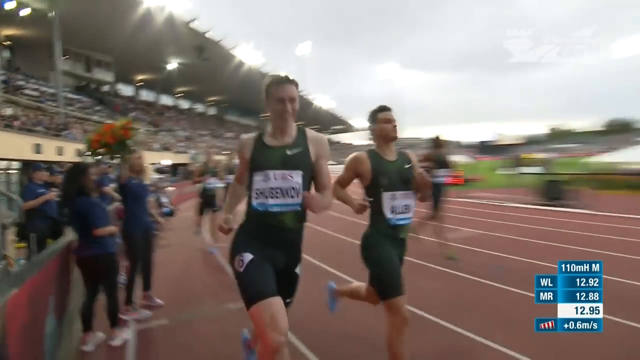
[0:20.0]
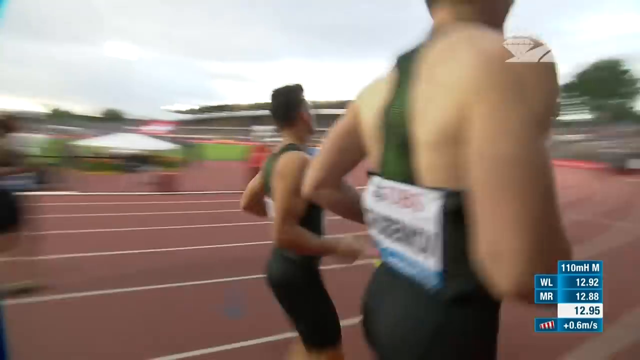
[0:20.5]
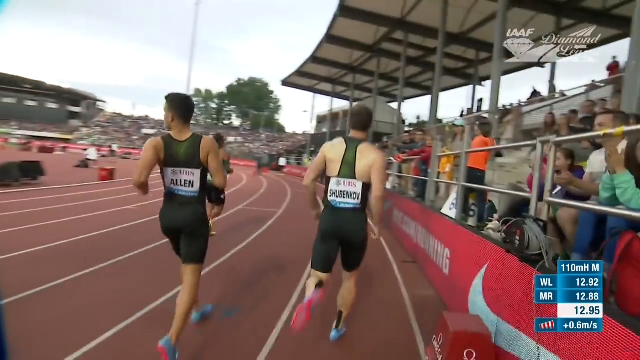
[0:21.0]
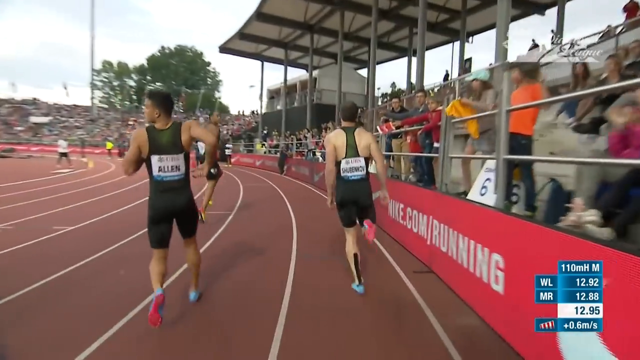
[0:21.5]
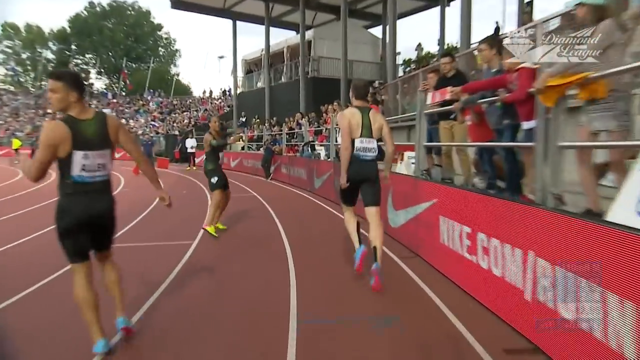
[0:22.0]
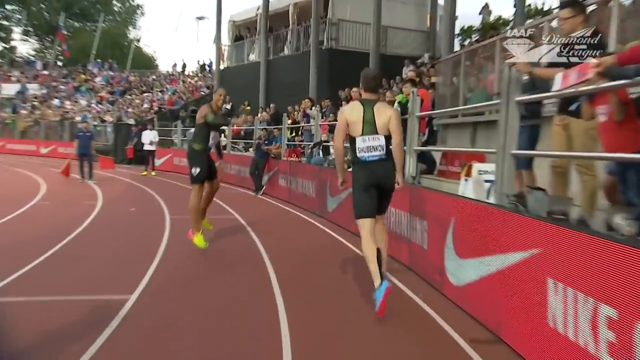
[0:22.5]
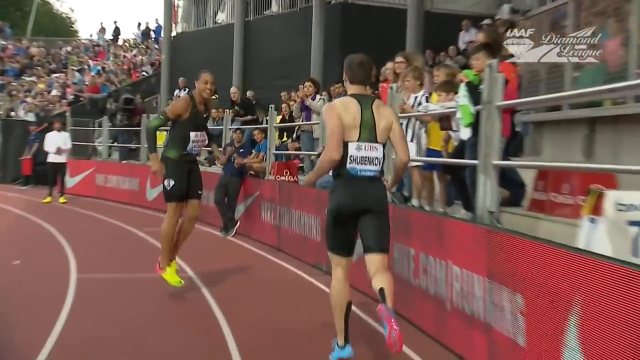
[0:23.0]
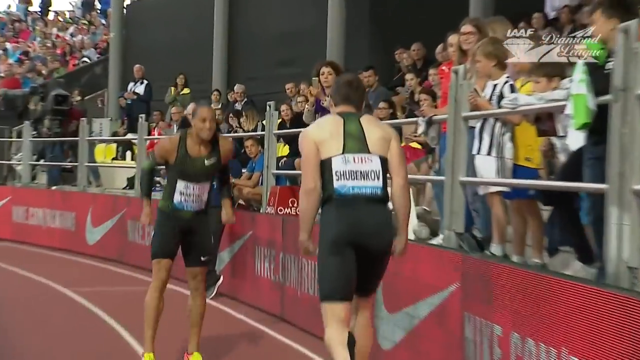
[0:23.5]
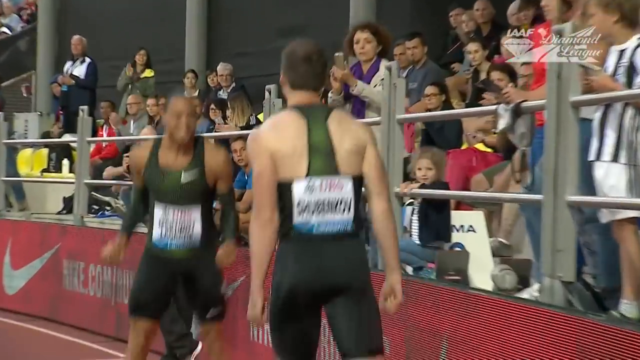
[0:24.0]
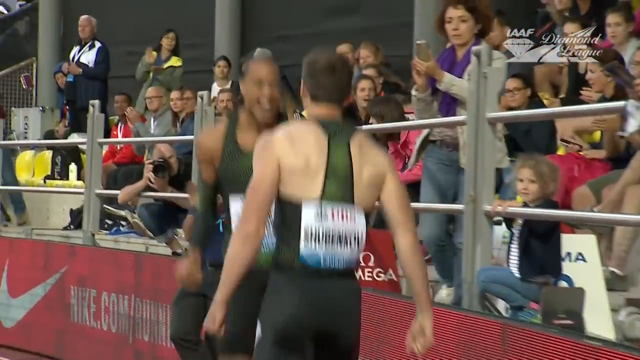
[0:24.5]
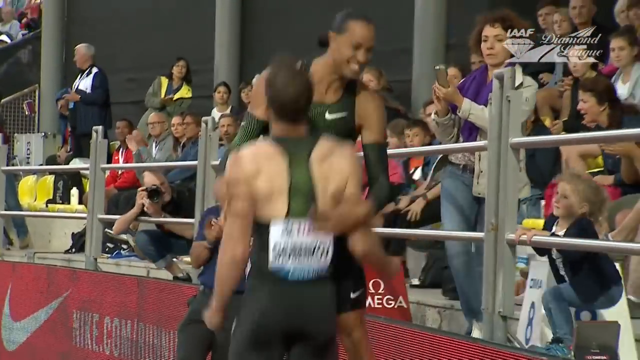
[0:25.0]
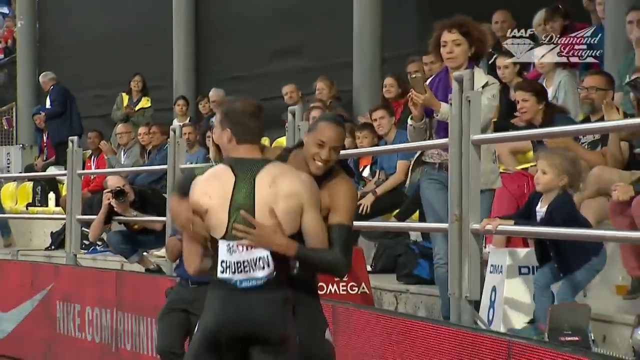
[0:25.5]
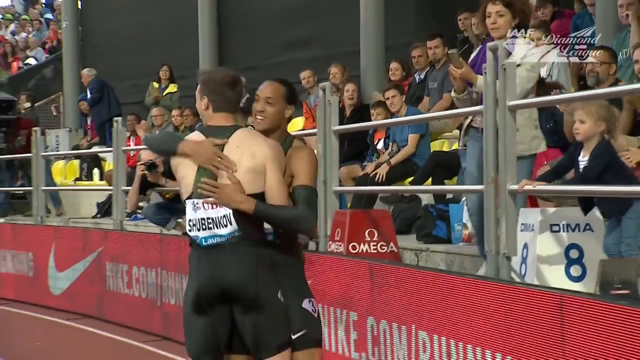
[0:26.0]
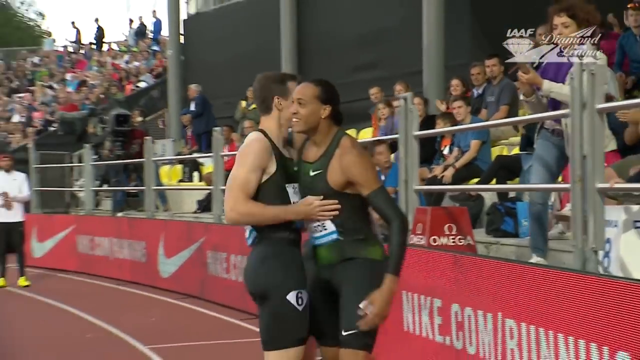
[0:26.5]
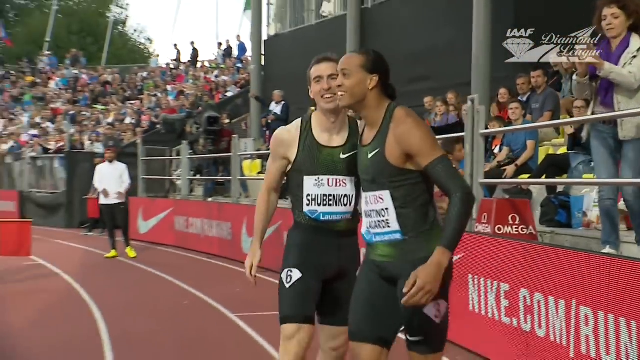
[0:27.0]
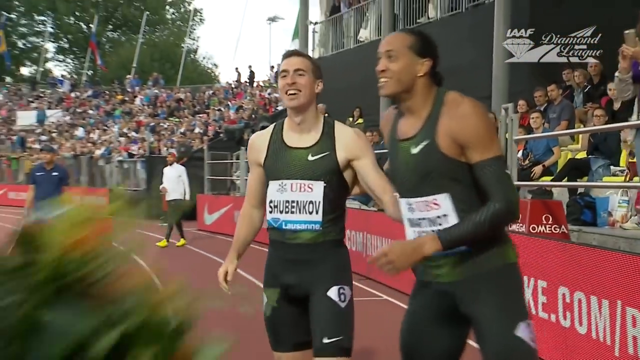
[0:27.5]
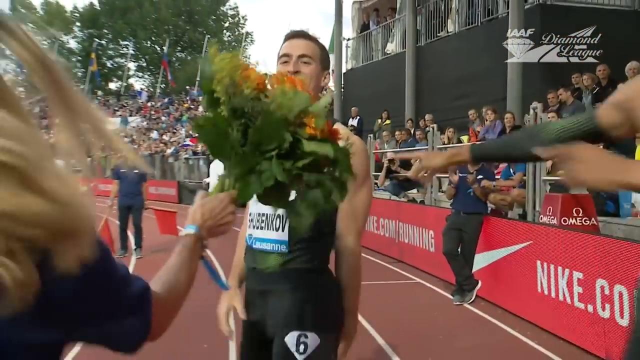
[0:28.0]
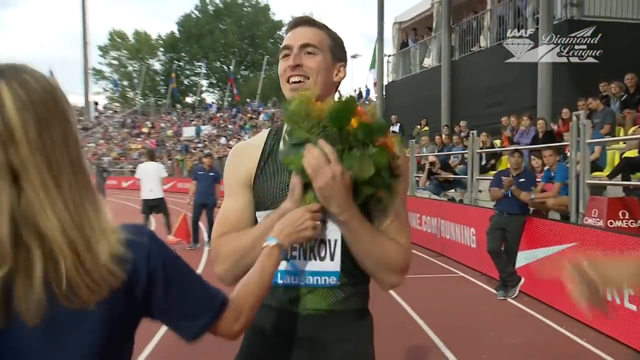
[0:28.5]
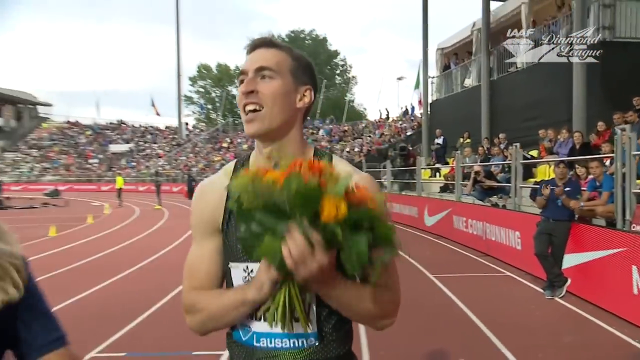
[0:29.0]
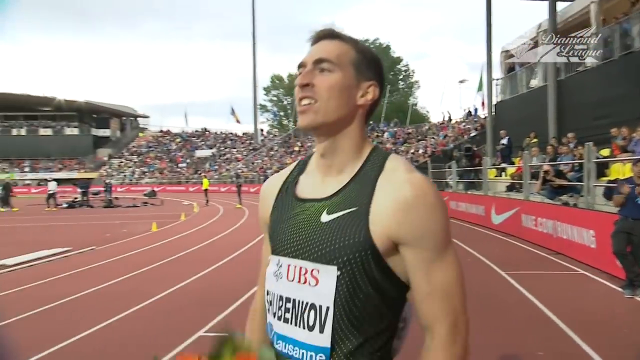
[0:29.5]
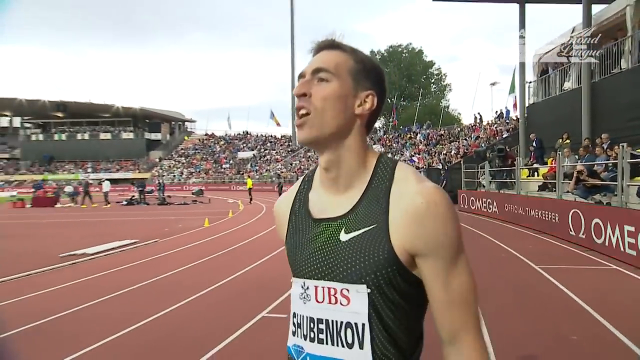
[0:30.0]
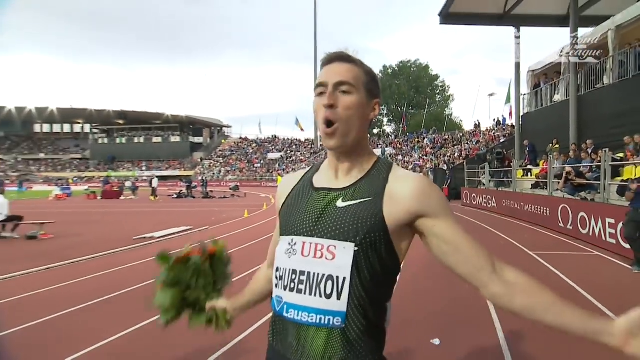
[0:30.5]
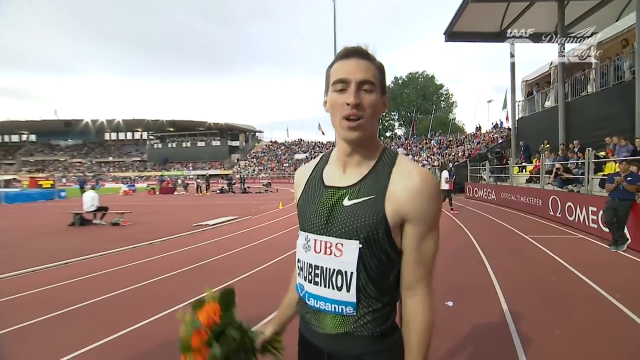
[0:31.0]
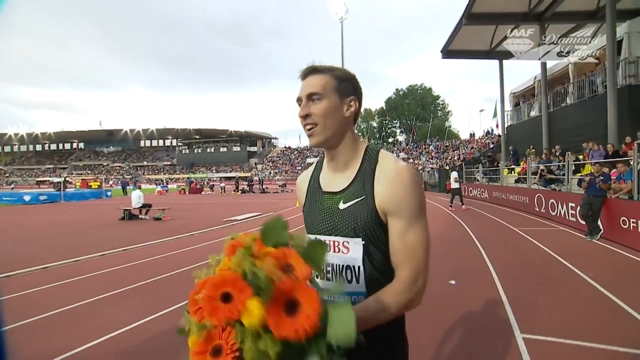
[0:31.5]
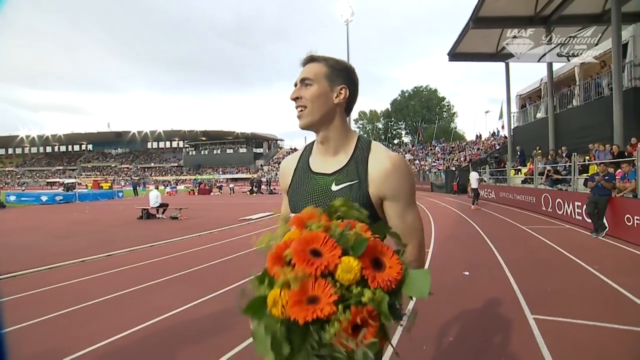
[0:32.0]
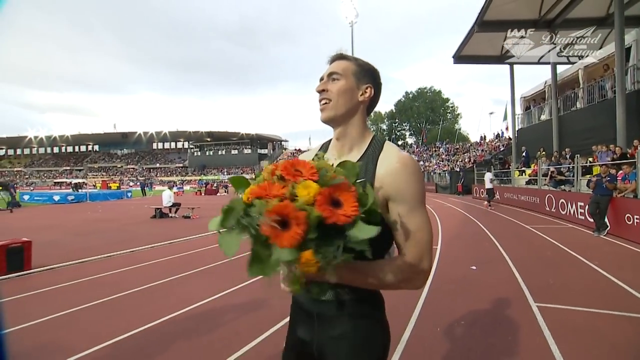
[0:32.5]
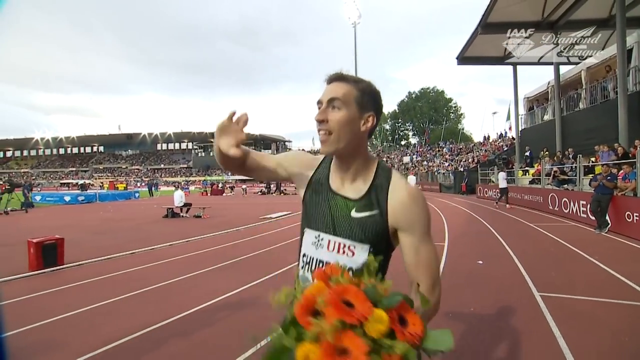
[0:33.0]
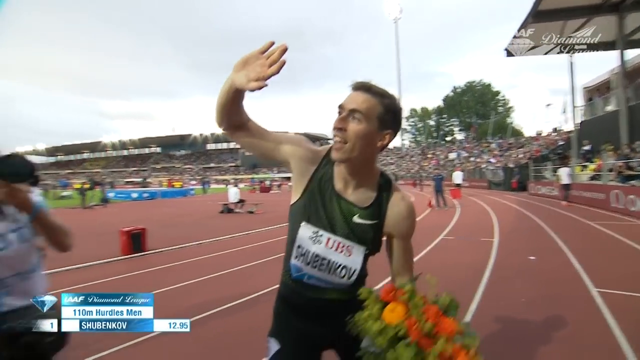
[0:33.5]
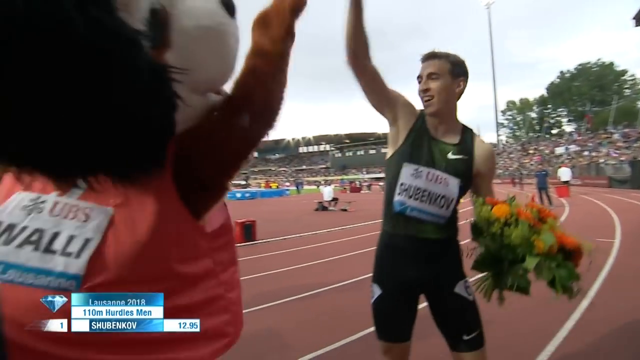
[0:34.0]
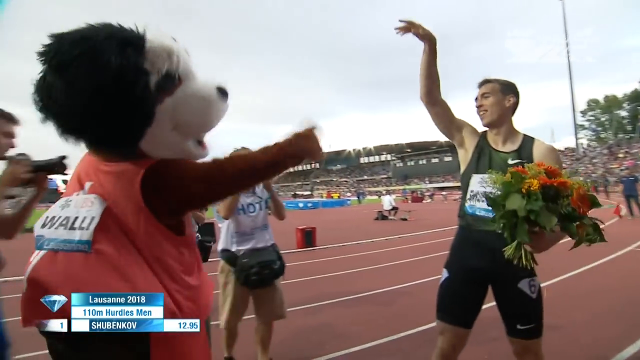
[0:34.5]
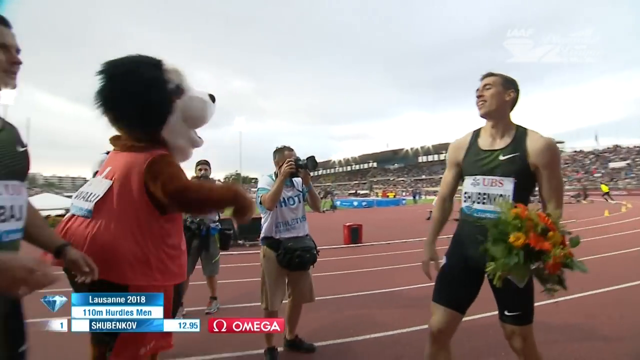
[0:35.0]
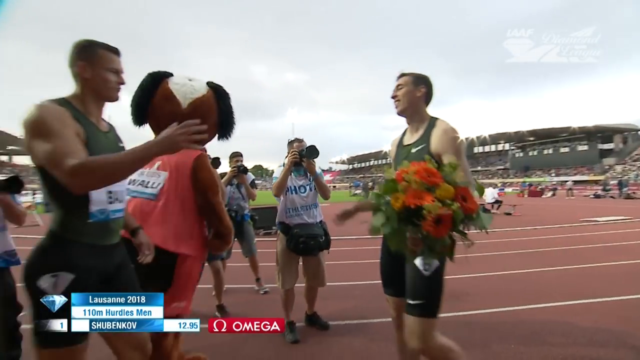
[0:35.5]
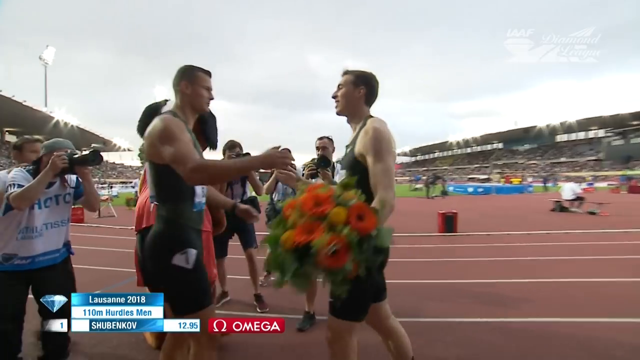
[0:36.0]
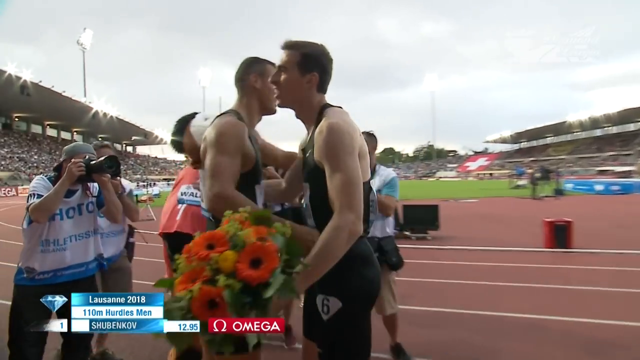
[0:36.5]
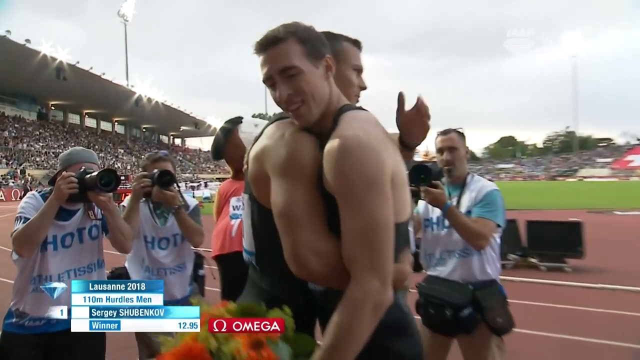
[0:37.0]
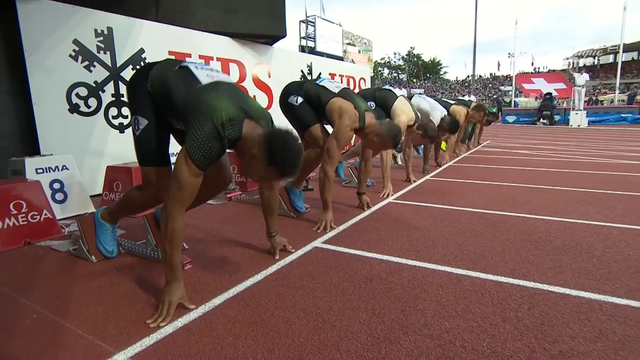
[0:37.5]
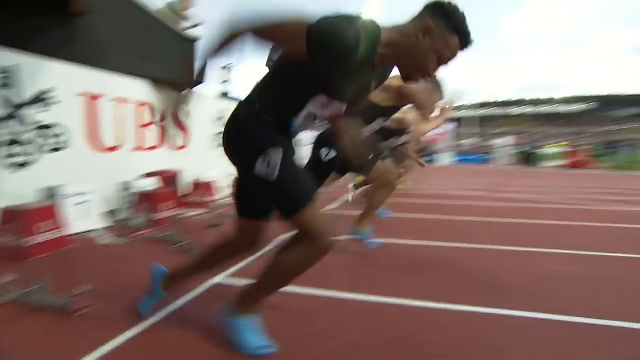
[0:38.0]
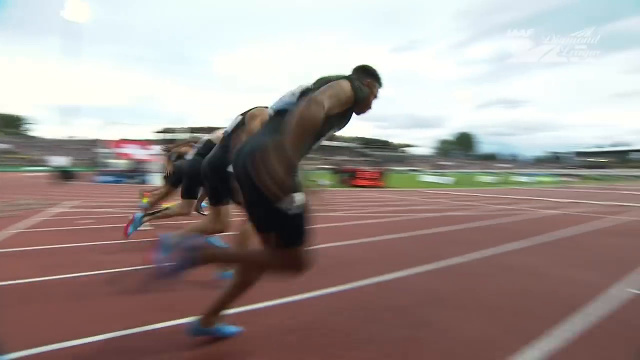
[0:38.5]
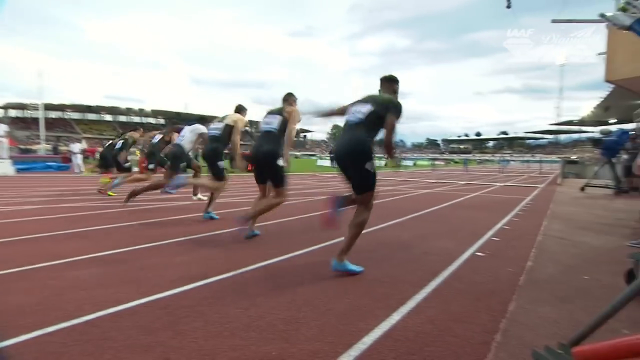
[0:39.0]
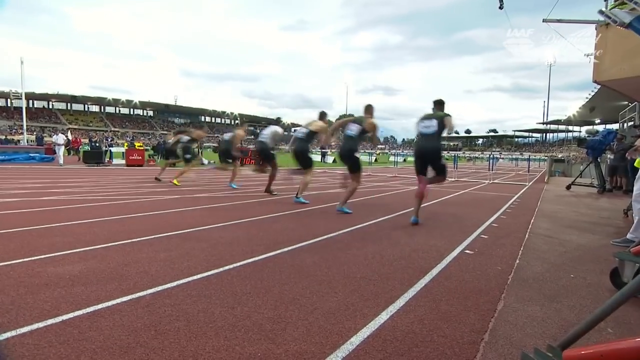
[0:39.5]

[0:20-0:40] Eight people are running, apparently training for sports, at different paces. They are wearing proper footwear and all seem hydrated. They seem to be enjoying their running, look experienced, and seem very healthy.